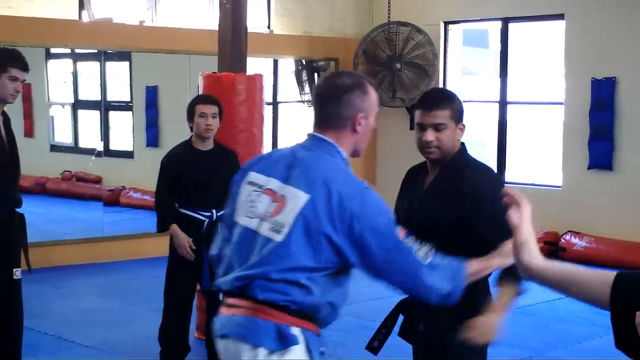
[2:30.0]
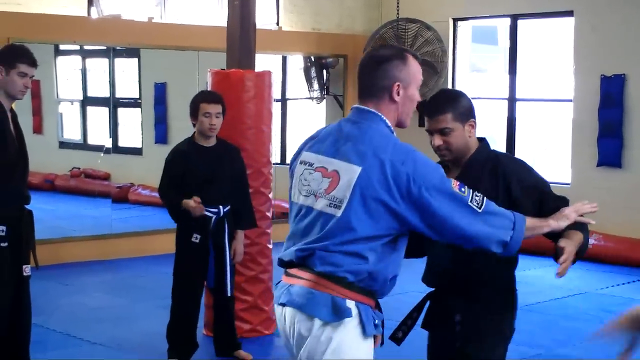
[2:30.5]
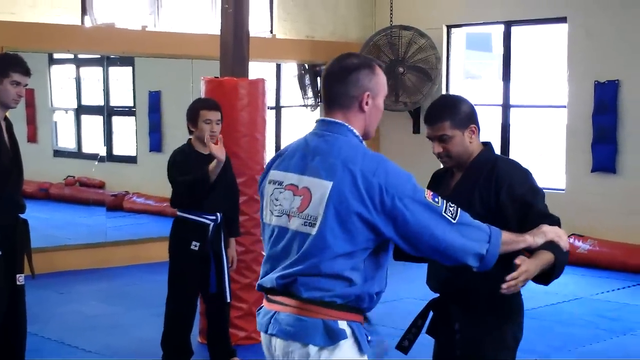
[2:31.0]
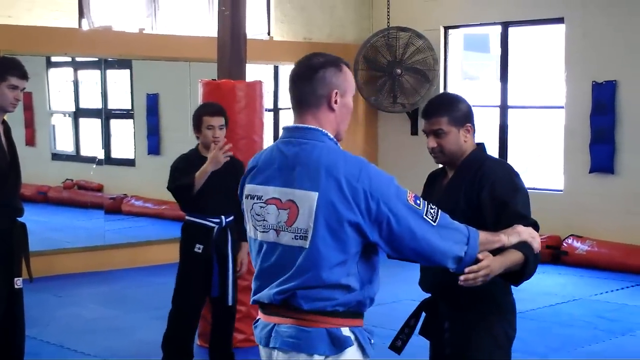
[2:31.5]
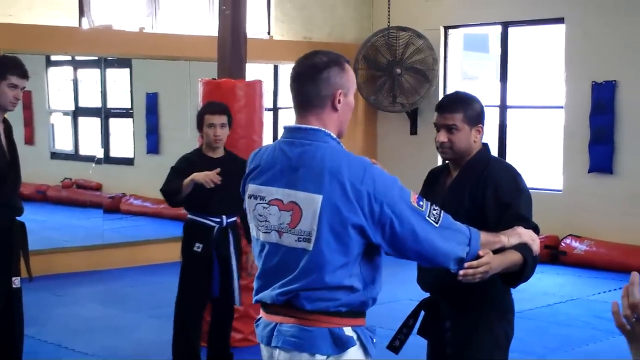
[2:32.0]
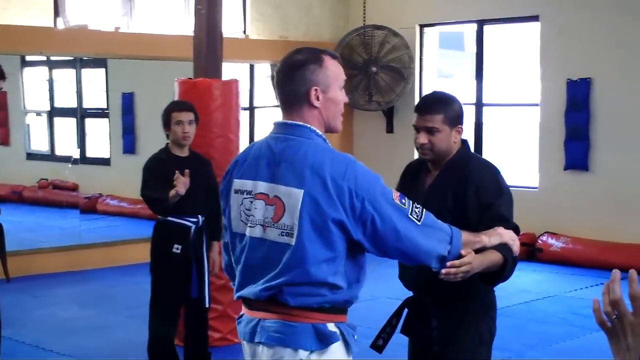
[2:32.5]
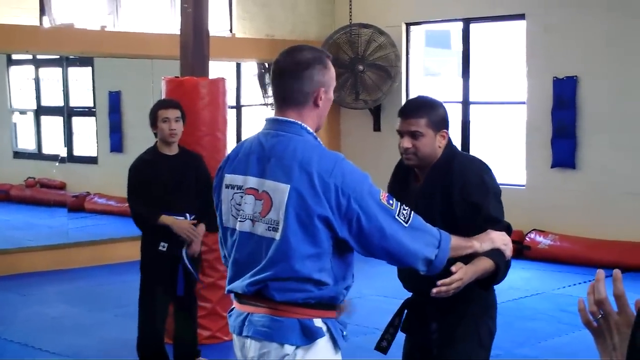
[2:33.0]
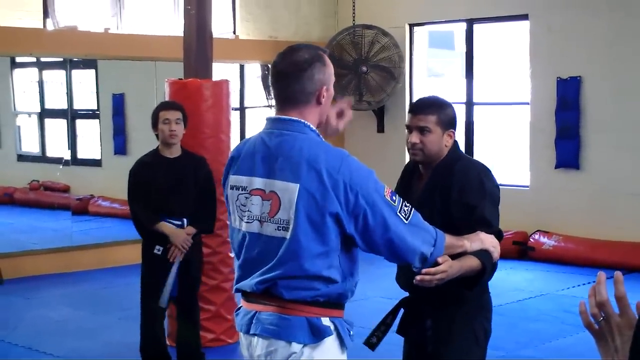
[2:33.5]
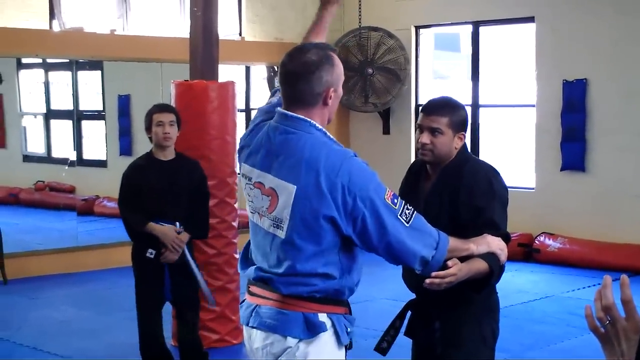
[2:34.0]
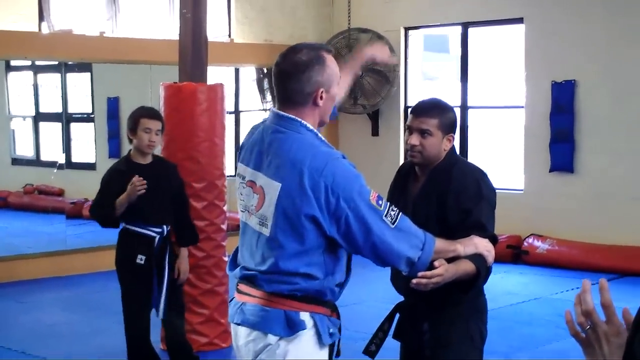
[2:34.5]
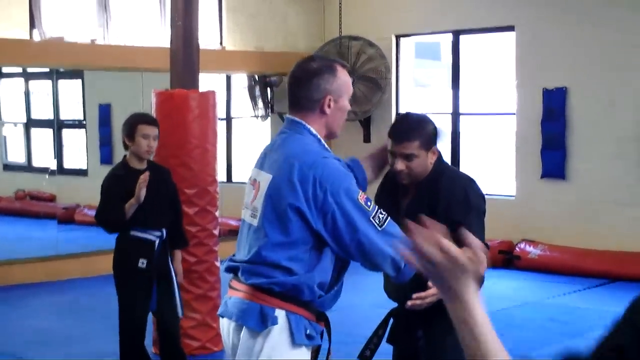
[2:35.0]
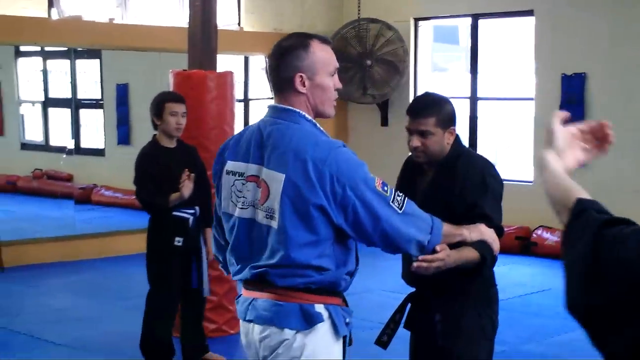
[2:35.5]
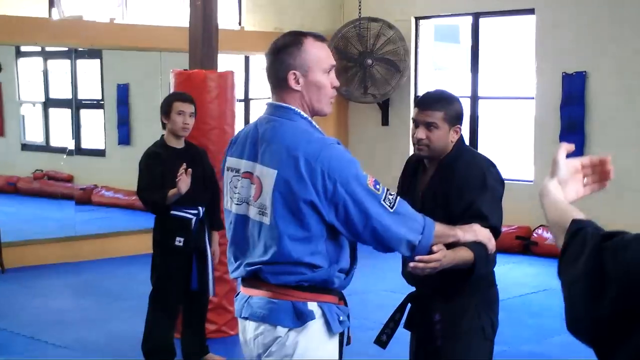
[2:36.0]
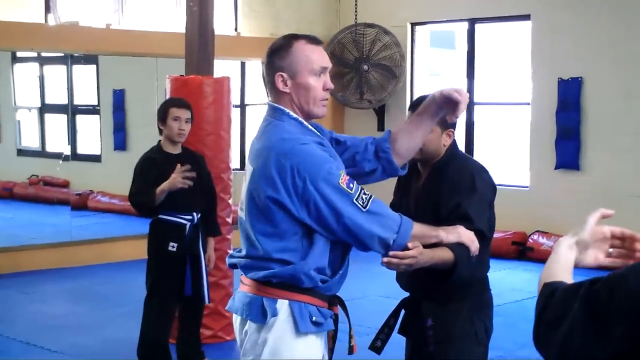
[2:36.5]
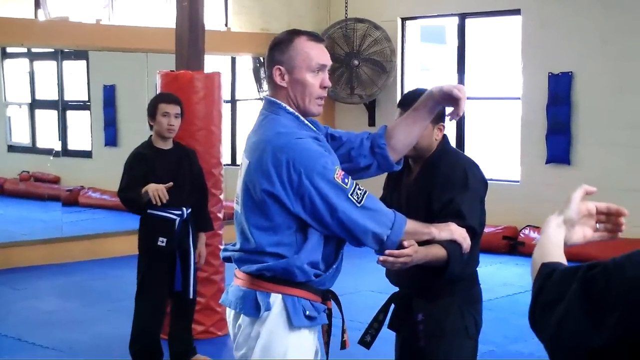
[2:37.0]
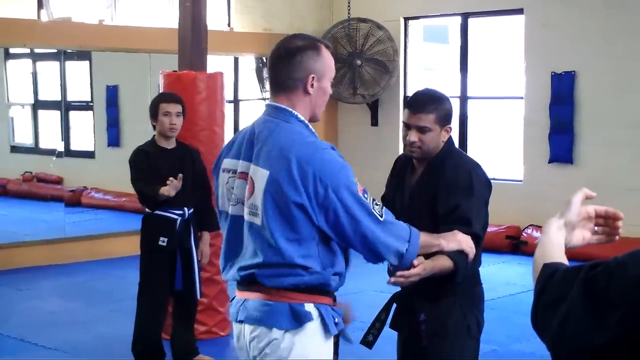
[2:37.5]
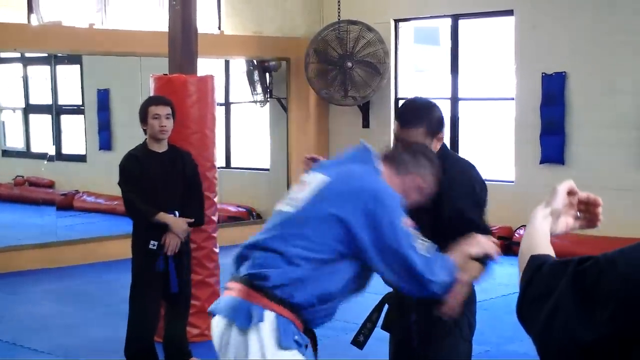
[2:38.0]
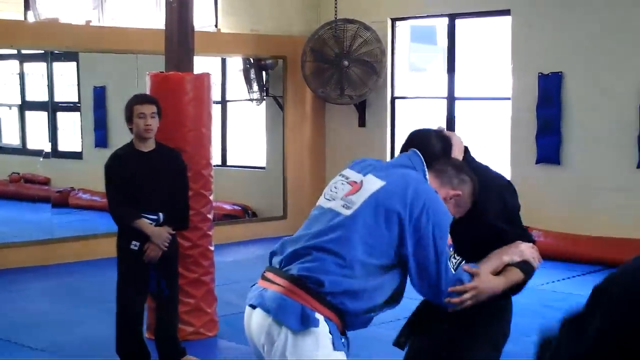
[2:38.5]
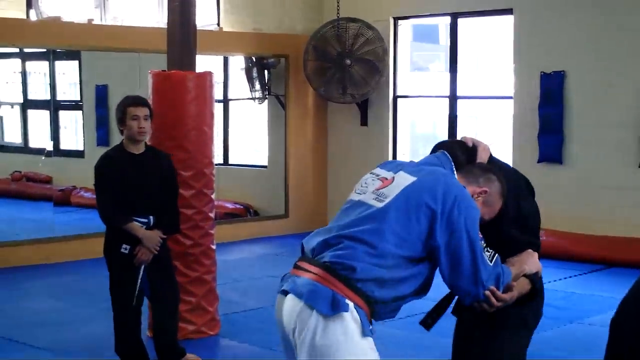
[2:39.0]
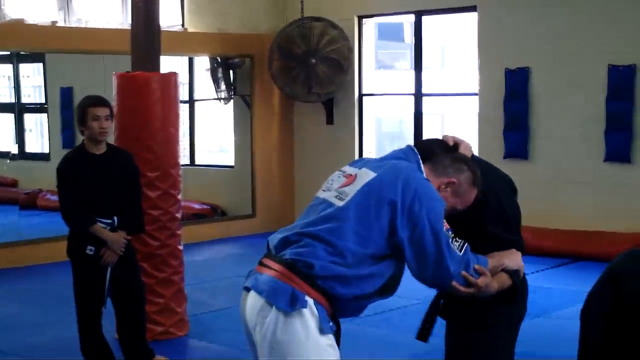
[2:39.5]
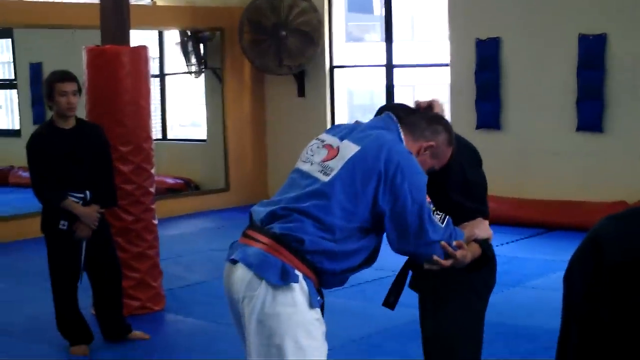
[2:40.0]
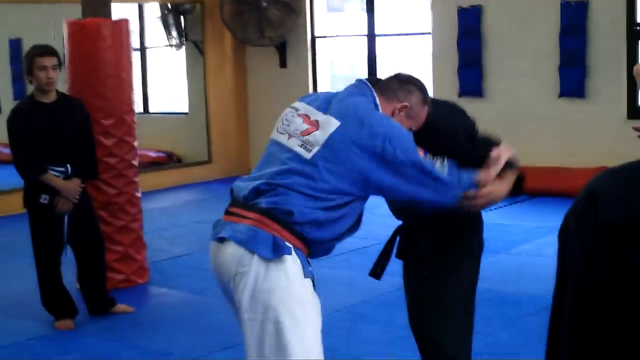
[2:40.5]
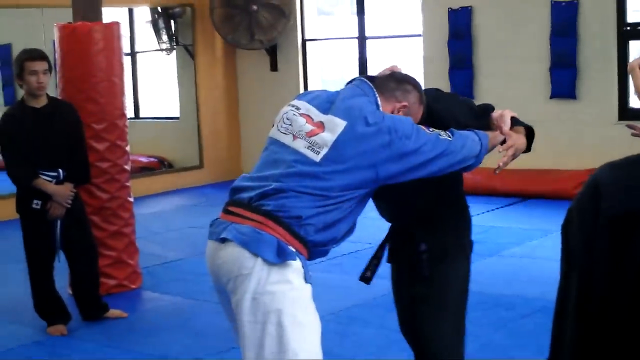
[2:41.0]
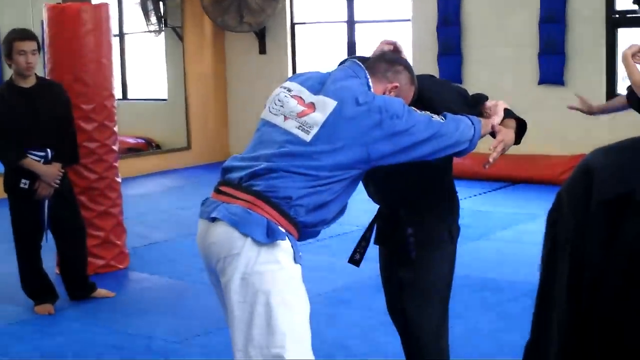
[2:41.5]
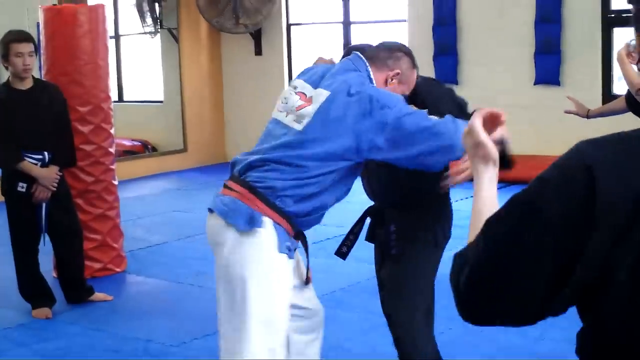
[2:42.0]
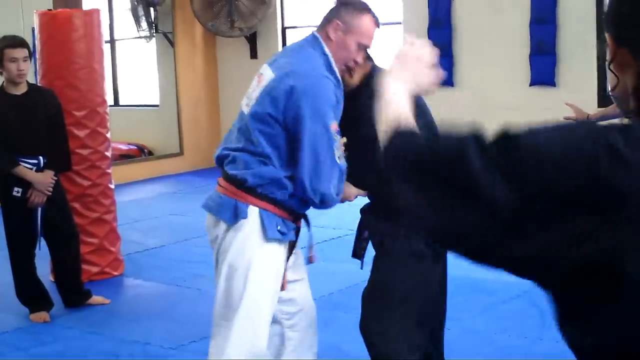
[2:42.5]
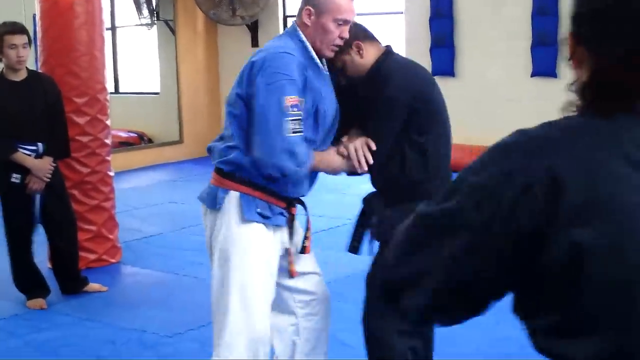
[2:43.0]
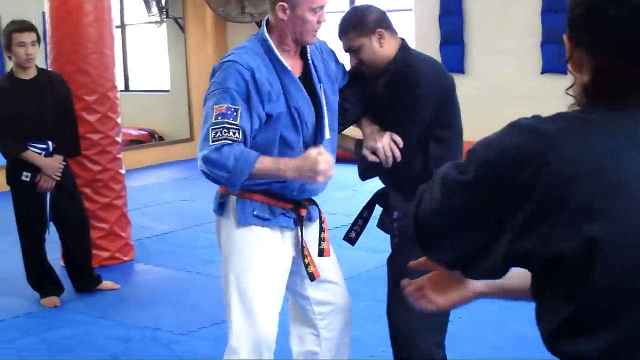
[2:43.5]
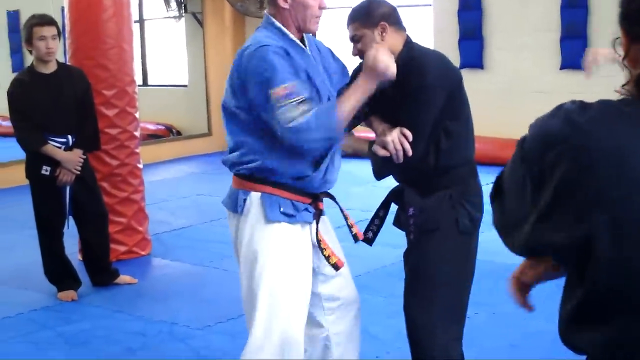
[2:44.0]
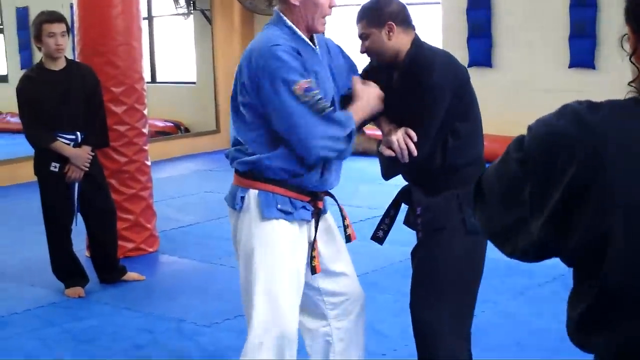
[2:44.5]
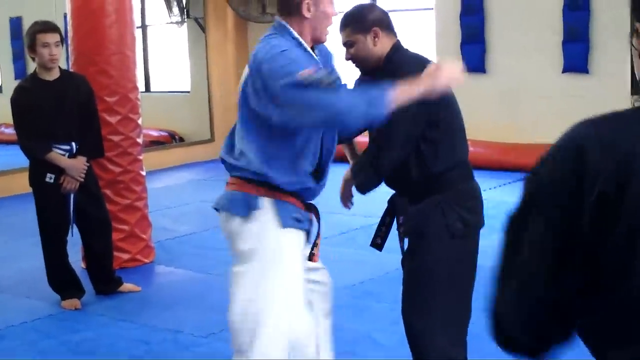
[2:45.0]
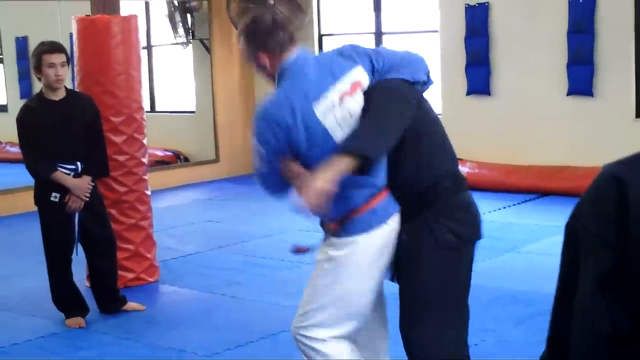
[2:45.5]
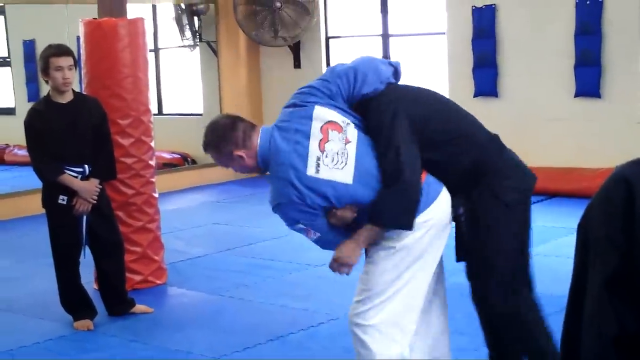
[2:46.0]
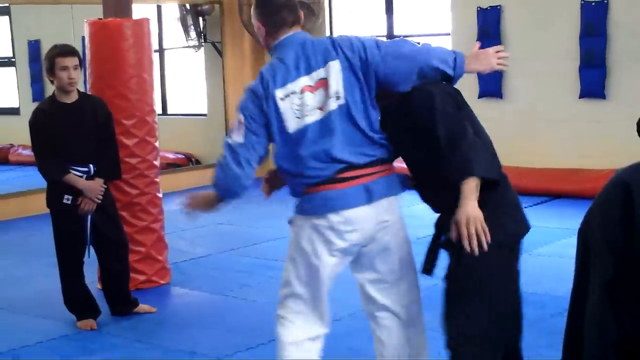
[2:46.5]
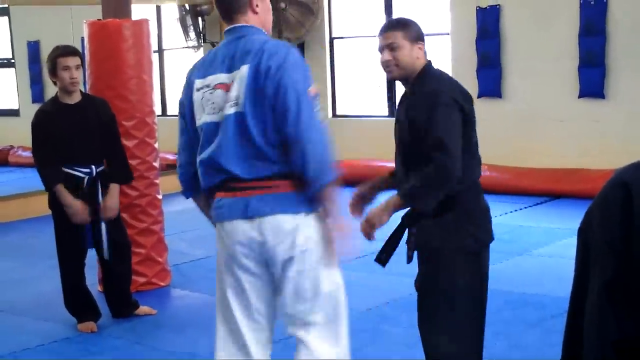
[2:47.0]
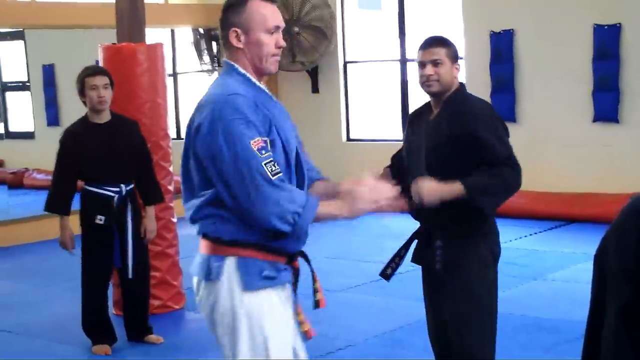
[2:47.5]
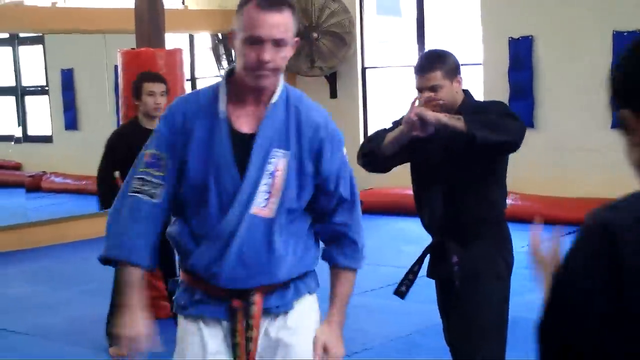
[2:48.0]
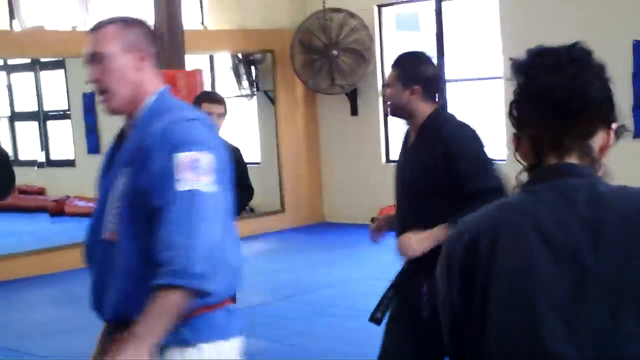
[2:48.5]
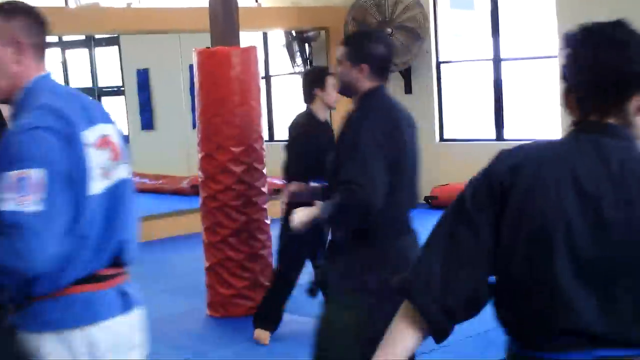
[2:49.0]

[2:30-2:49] The instructor of a martial arts class demonstrates moves using one of the students as a model. He wears a blue jacket, white pants, some red belts and a black one, while the students all wear black outfits with belts of different colors according to their ability. The gym floor is padded blue, with red padding around a column that comes down in the middle of the room and padding on the side wall underneath the window. A large fan is in the corner, and one wall is mirrored. The instructor puts together the moves he has been teaching into consecutive moves while the student cooperates, and the other students on the side move their arms as he demonstrates to better learn the lesson. Once finished, the instructor turns around and walks off the floor.